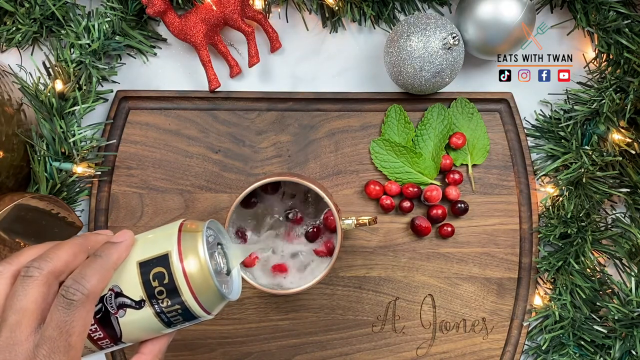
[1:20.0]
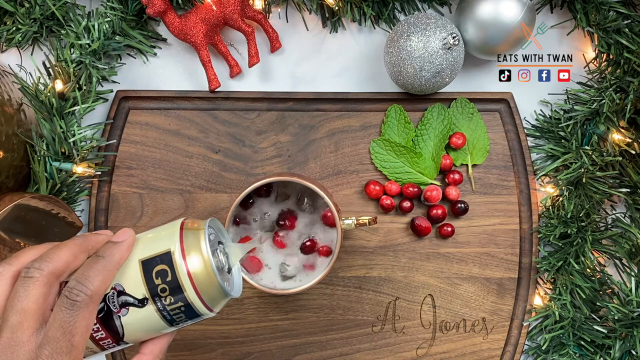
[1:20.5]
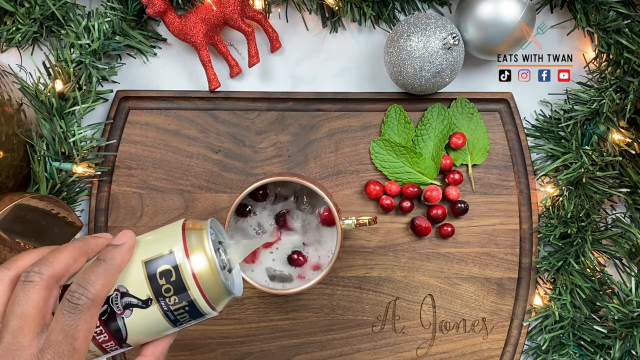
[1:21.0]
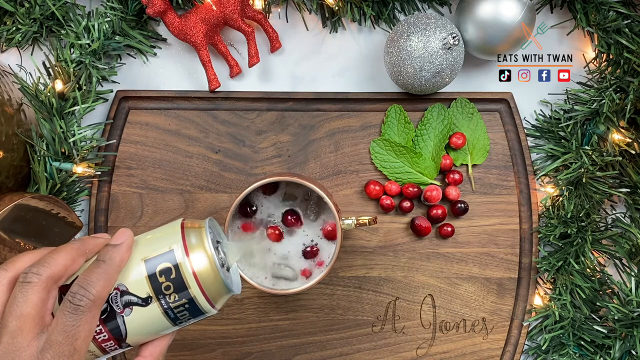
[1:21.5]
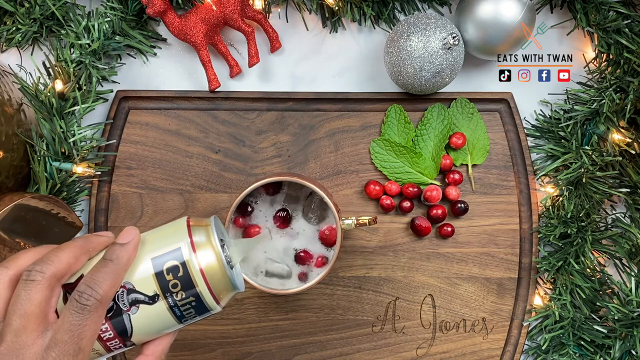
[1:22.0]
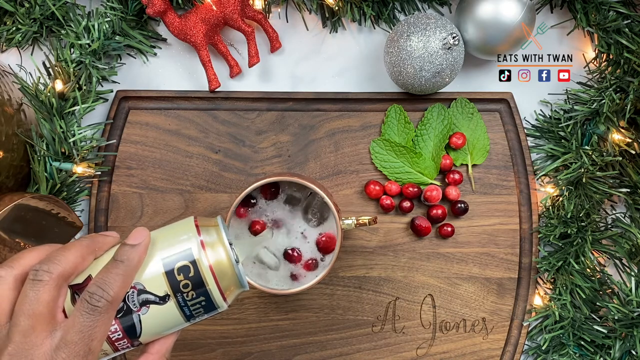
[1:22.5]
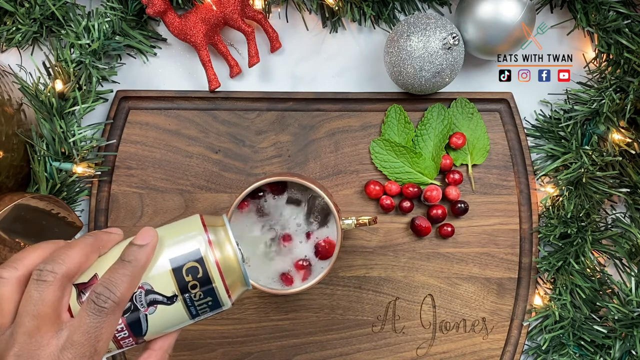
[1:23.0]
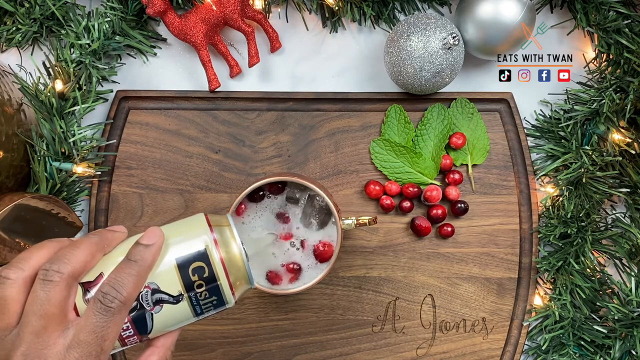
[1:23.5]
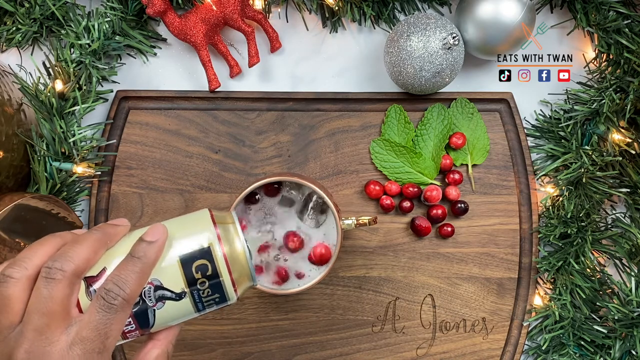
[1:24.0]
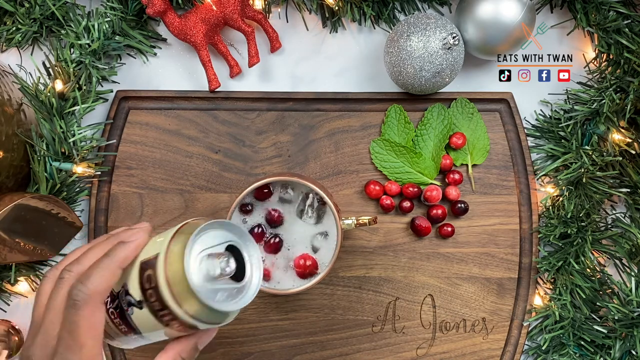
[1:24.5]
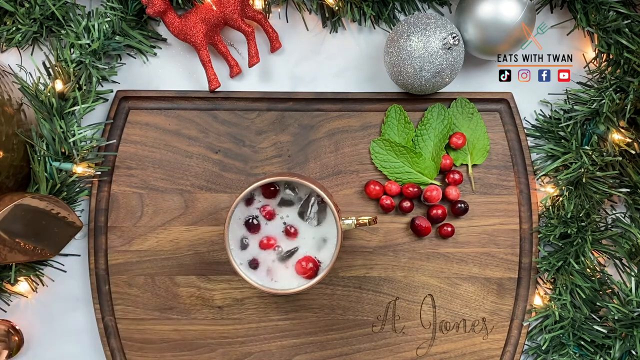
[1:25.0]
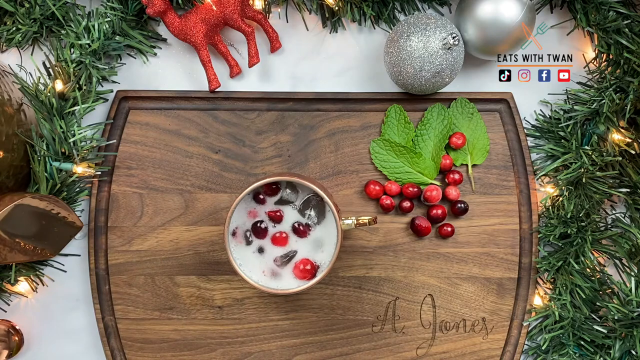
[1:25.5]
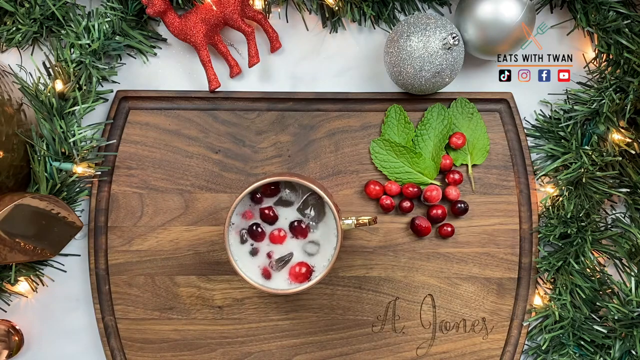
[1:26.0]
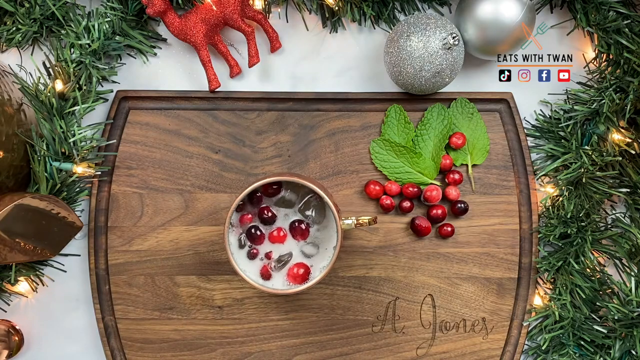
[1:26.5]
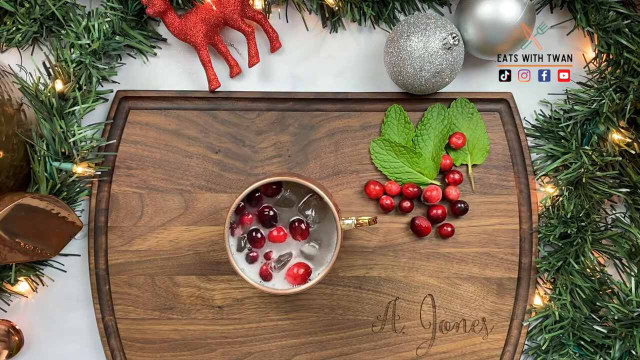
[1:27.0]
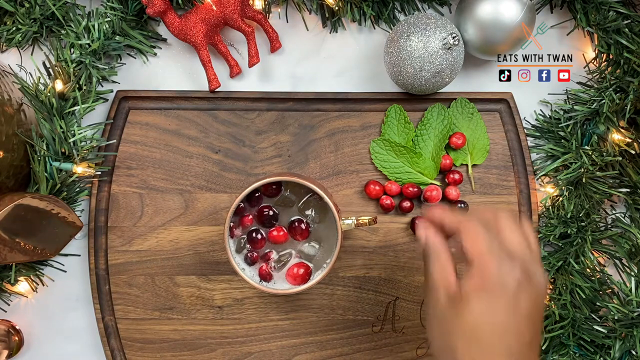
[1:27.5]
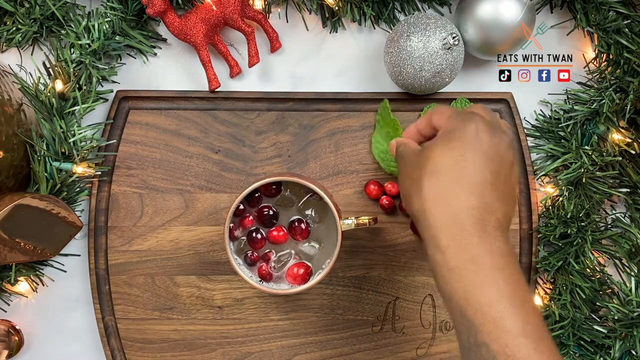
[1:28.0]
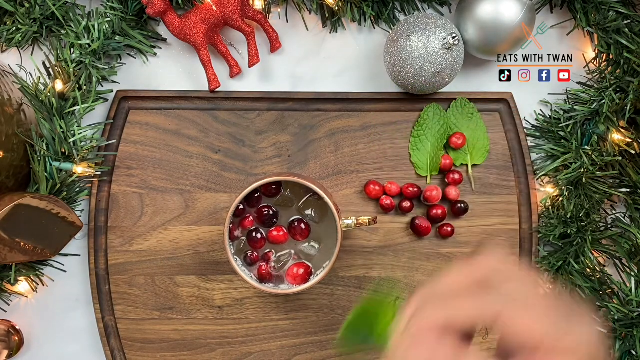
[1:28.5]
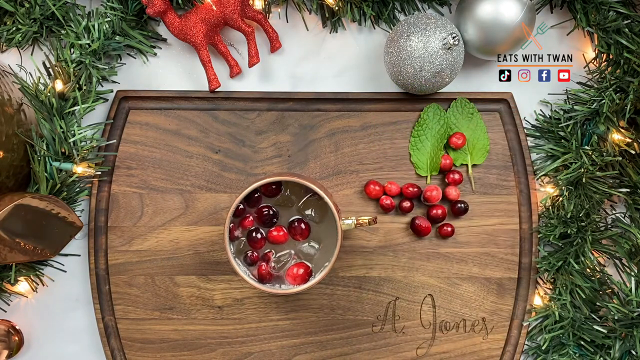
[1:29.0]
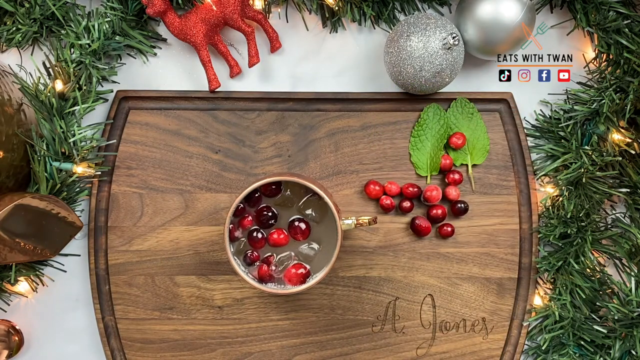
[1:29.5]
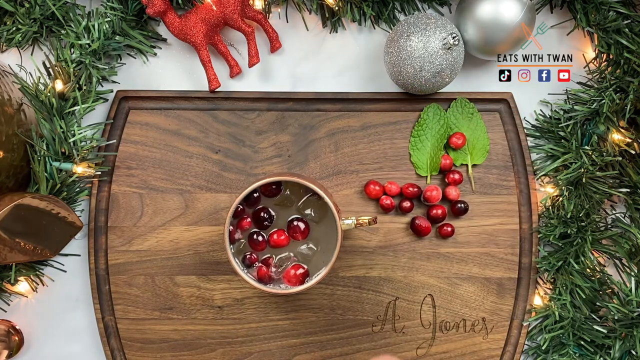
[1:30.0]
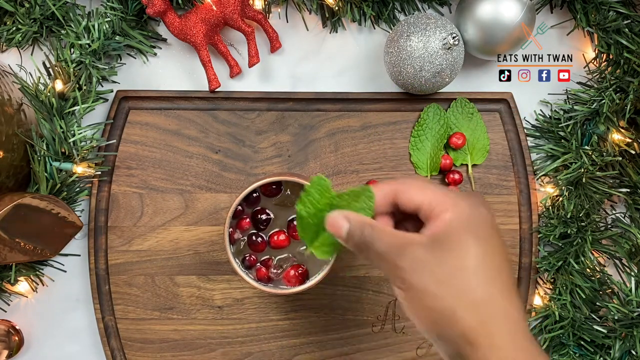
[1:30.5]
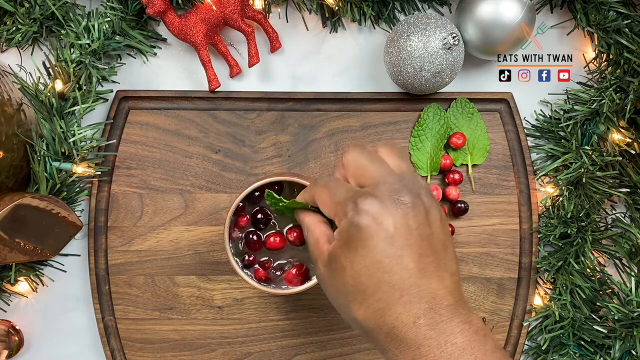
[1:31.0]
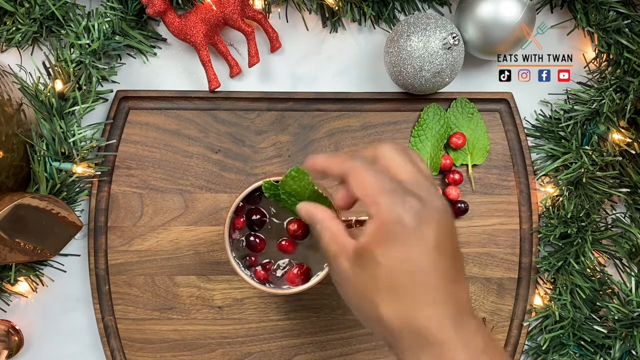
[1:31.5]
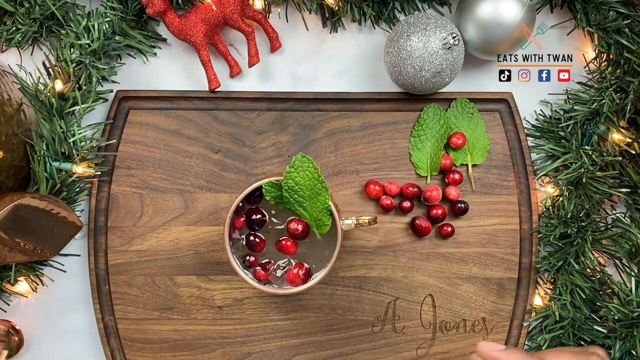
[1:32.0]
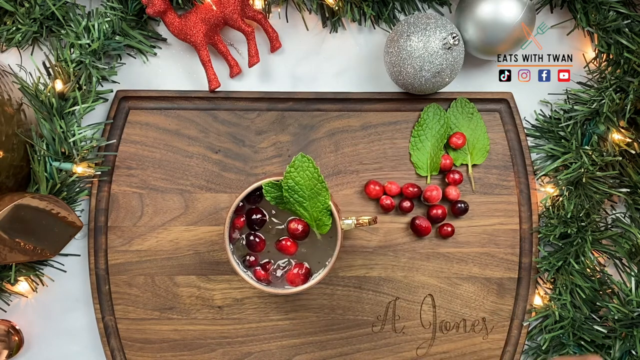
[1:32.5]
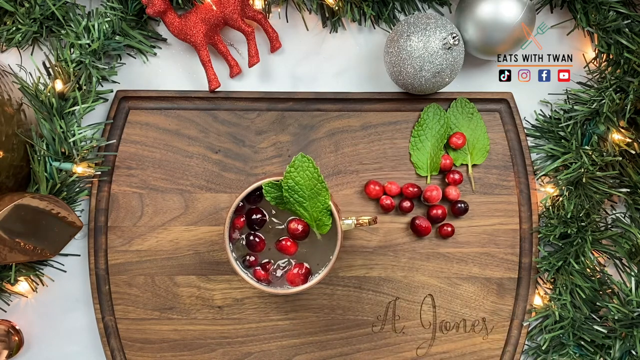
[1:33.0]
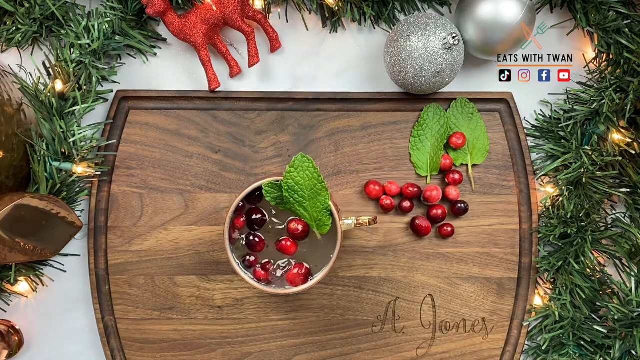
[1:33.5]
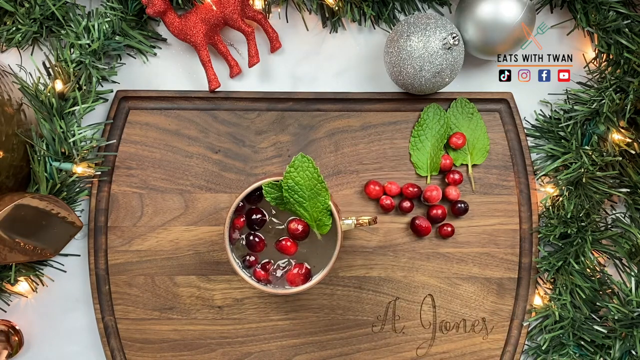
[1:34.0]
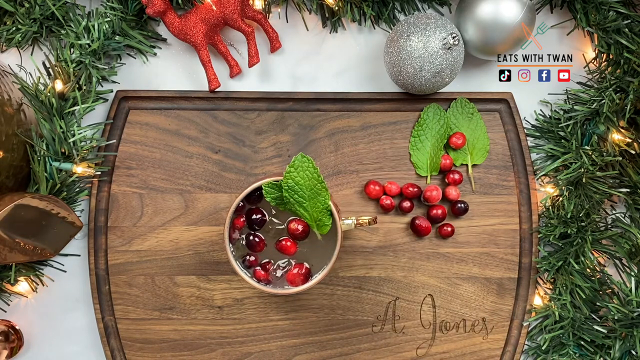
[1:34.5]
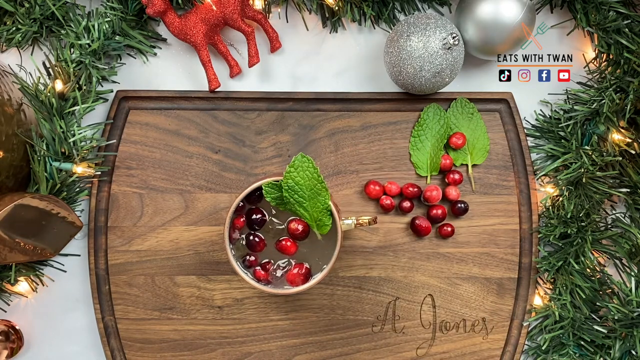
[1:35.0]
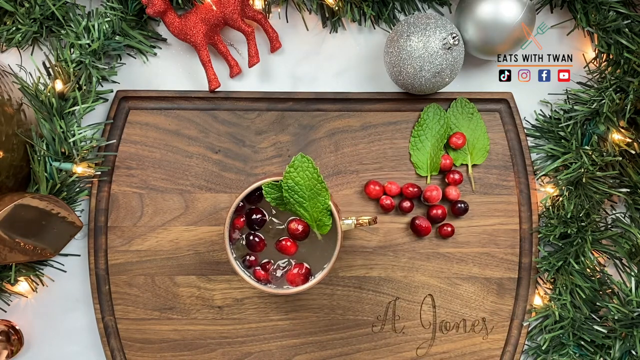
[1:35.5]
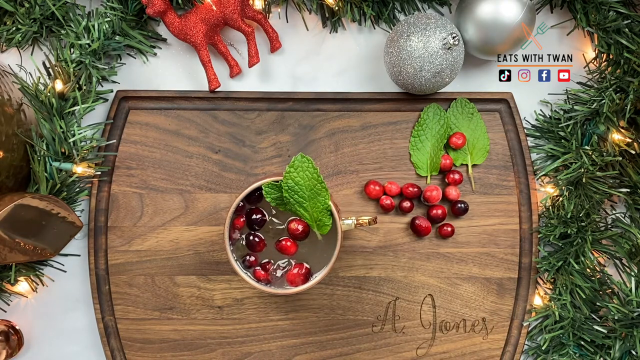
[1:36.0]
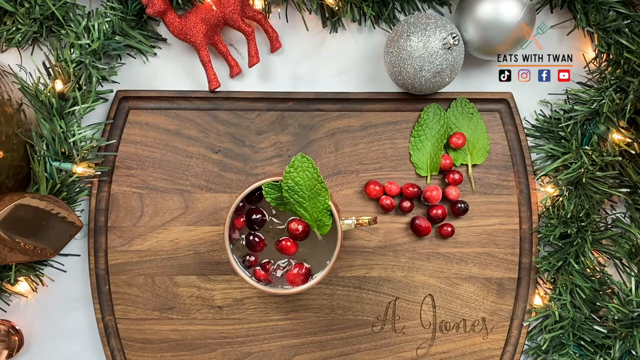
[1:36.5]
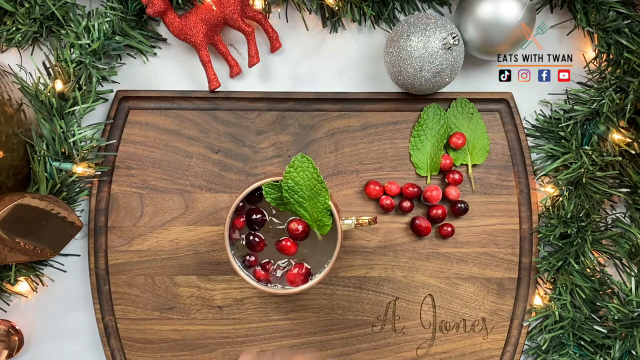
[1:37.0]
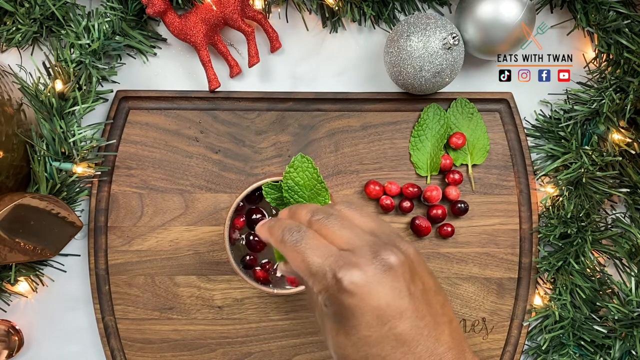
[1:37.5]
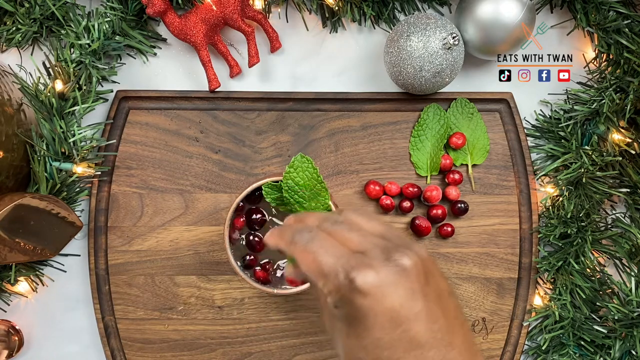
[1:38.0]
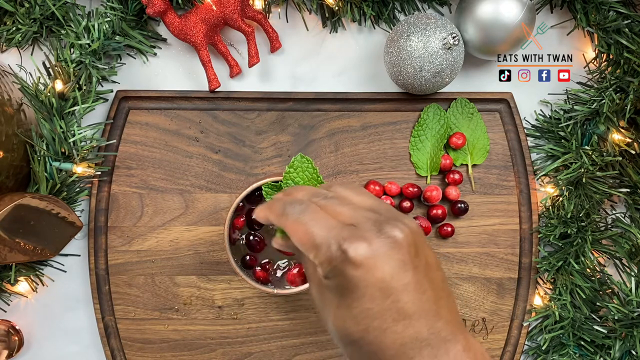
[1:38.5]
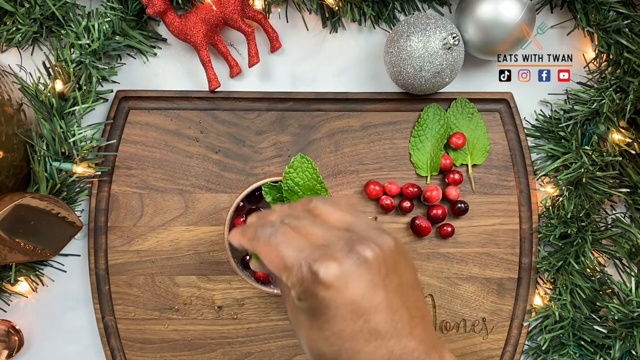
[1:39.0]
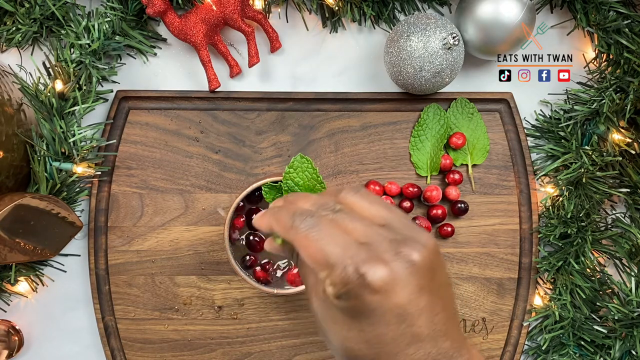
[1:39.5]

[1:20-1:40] From the top view of the cutting board, a person pours a can of beer or an alcoholic drink into a mug on the cutting board that has many pomegranates and some ice in it. He grabs two green leaves from the side and puts them in the mug with the drink, then appears to take a lime or a similar fruit and squeezes it into the mug, continuing to squeeze it into the drink. Many more pomegranates and two more leaves are on the cutting board. The brown wooden cutting board has Christmas decorations along its outside, including silver and red ornaments, and there is also a Christmas light along the outside of it.